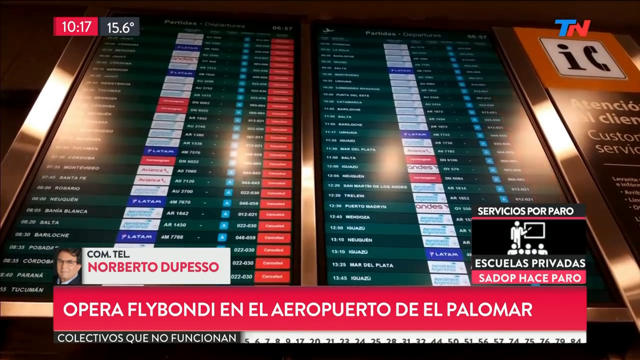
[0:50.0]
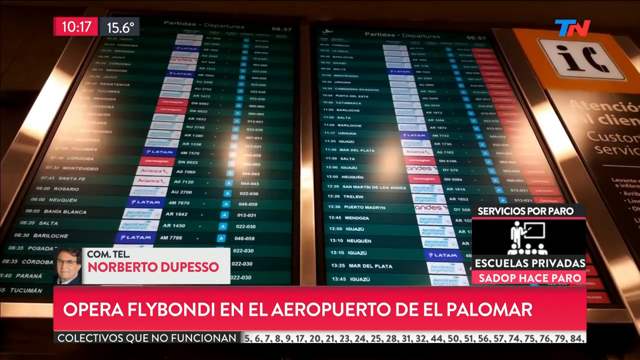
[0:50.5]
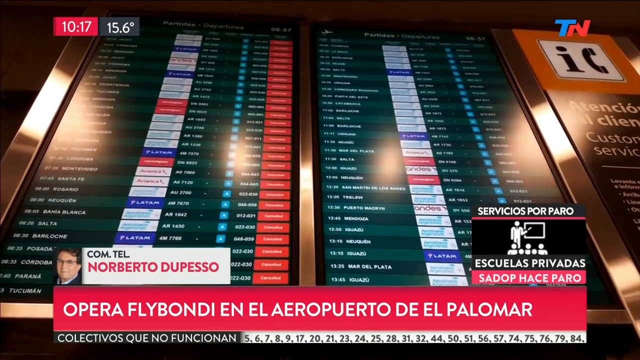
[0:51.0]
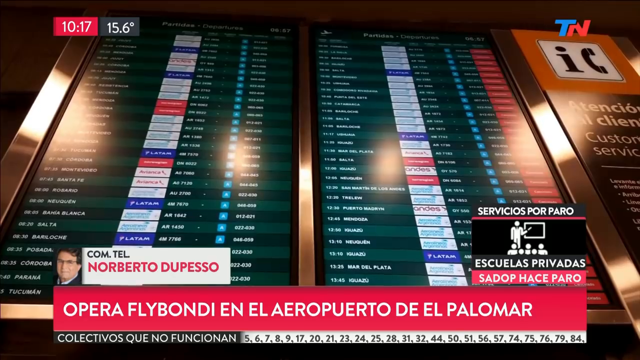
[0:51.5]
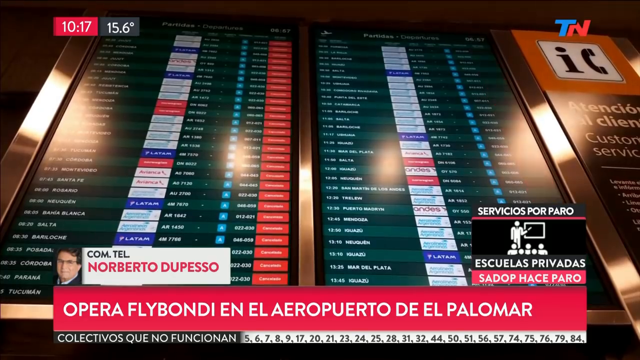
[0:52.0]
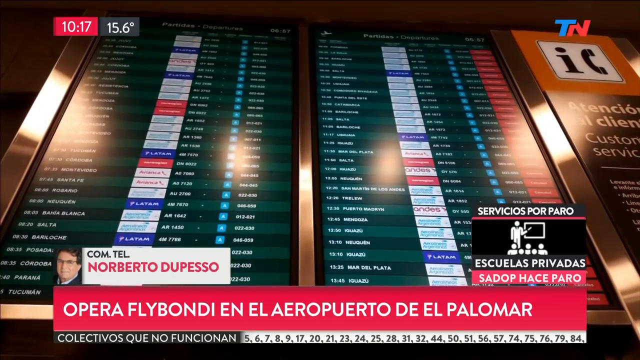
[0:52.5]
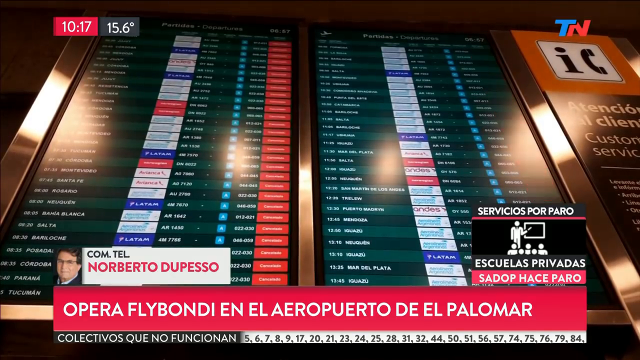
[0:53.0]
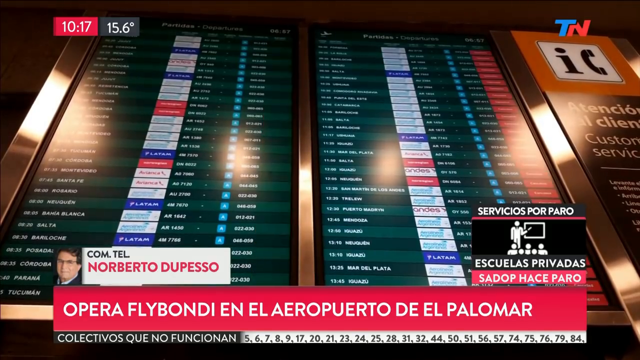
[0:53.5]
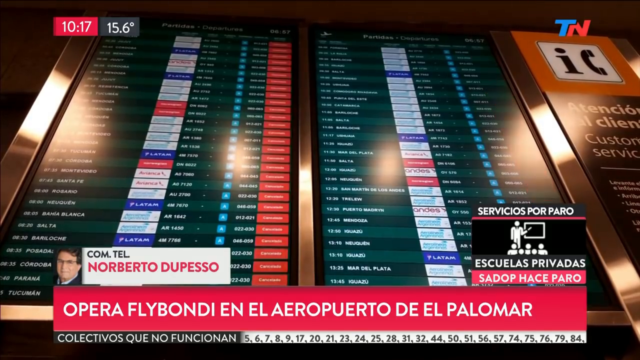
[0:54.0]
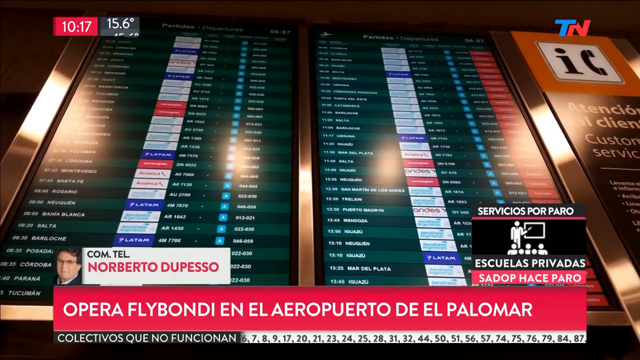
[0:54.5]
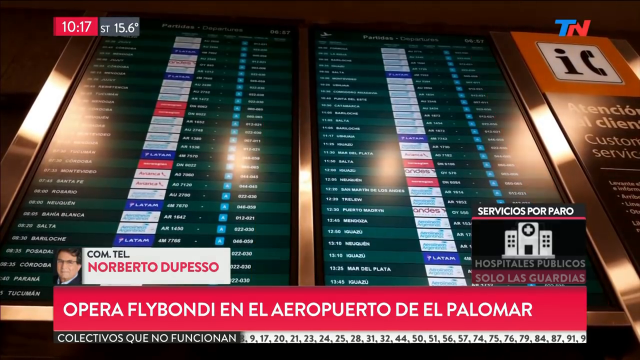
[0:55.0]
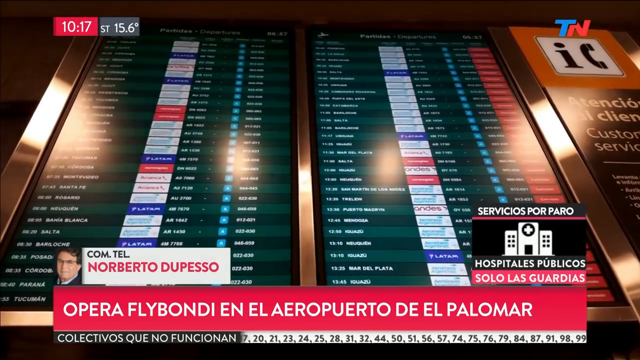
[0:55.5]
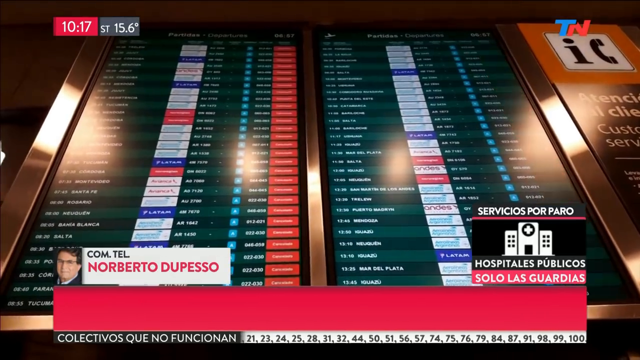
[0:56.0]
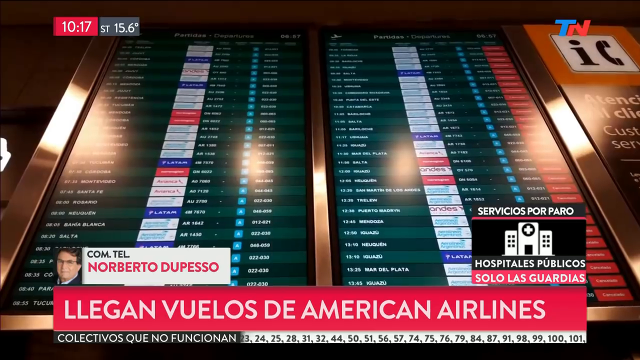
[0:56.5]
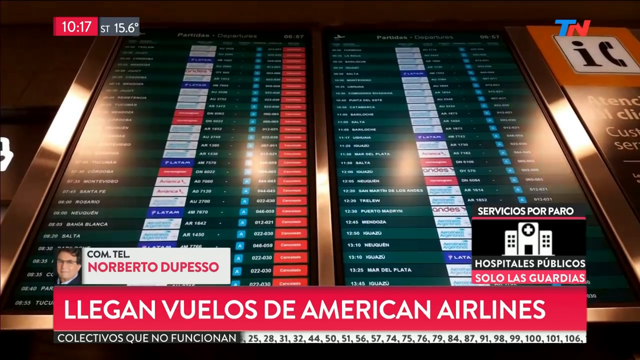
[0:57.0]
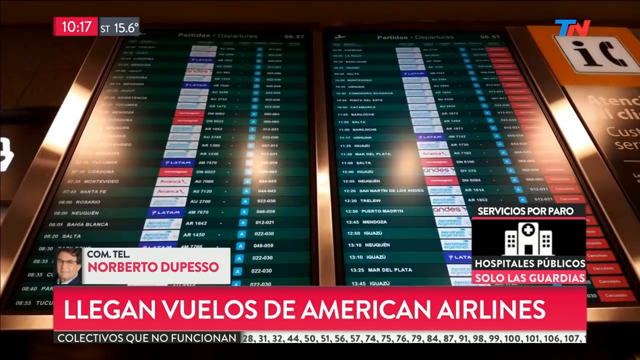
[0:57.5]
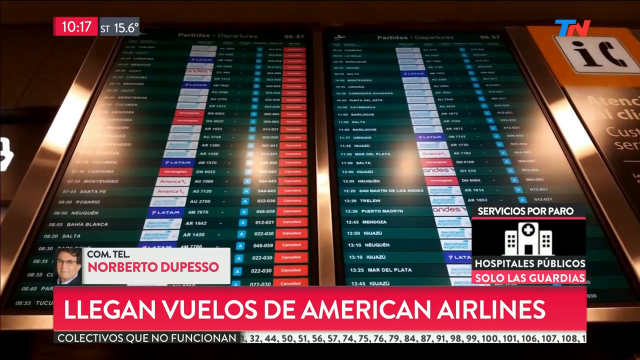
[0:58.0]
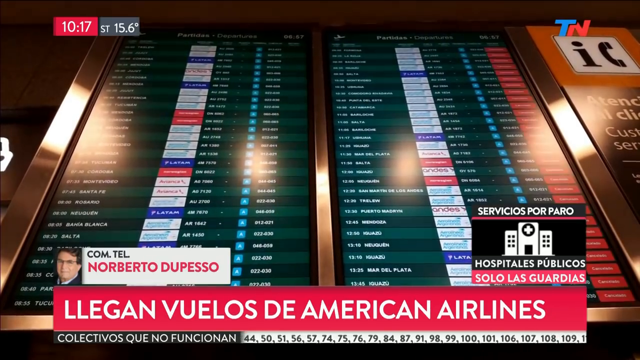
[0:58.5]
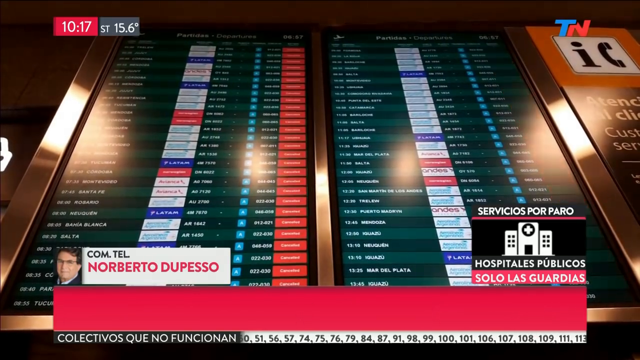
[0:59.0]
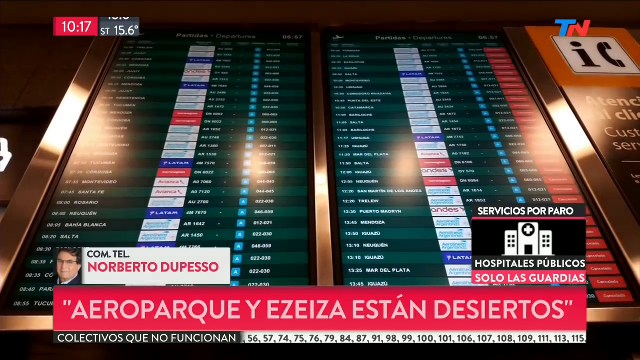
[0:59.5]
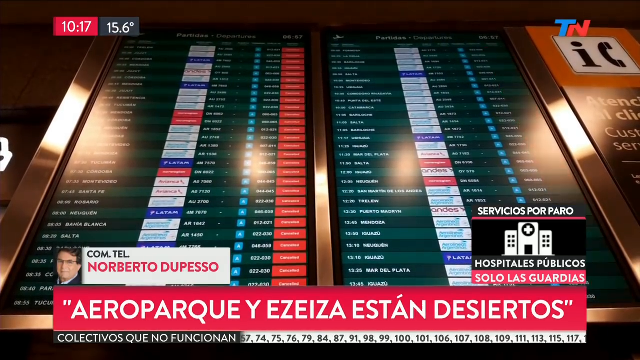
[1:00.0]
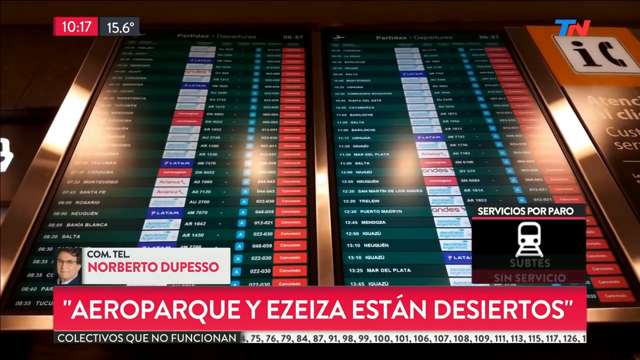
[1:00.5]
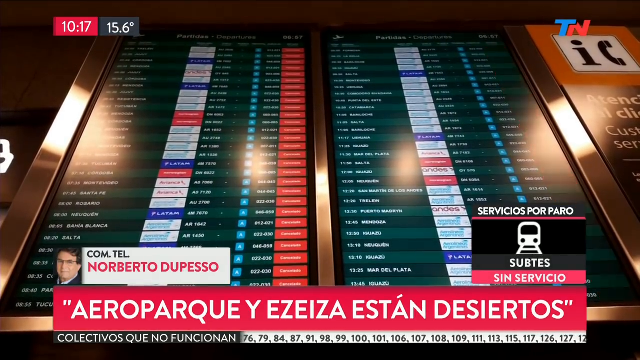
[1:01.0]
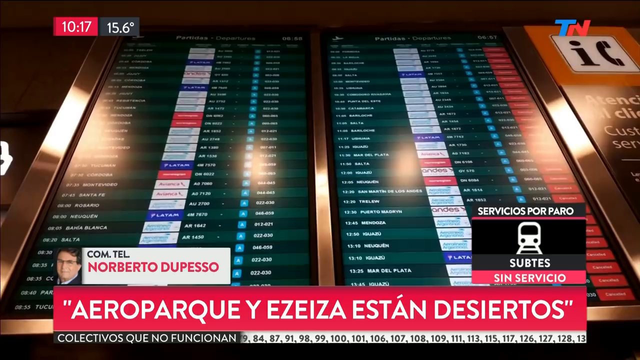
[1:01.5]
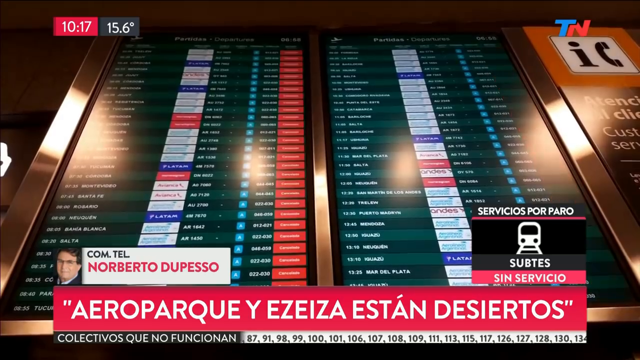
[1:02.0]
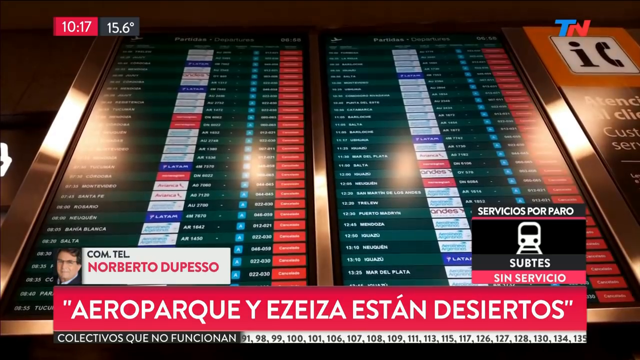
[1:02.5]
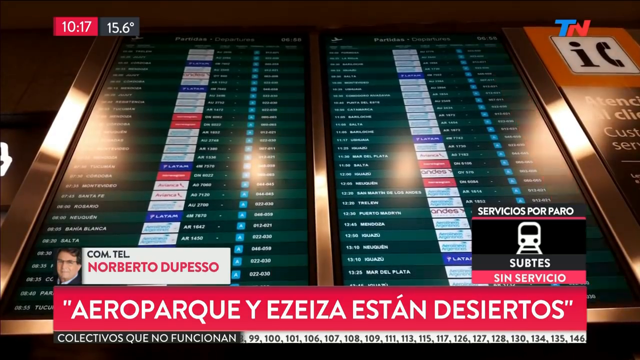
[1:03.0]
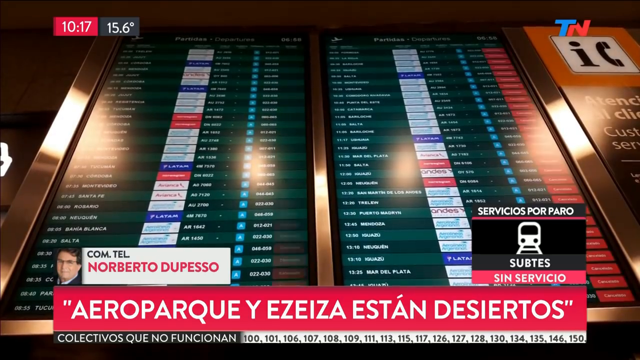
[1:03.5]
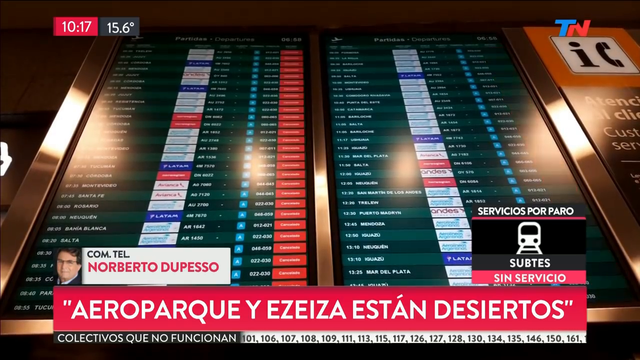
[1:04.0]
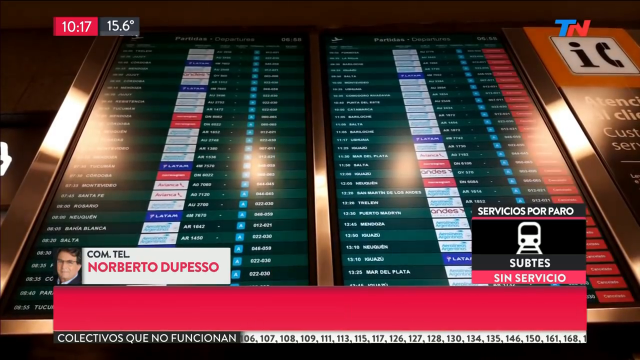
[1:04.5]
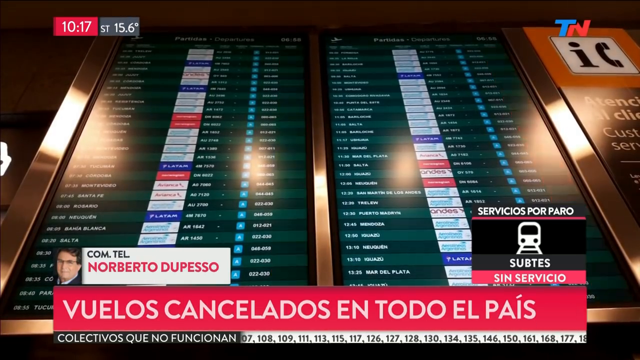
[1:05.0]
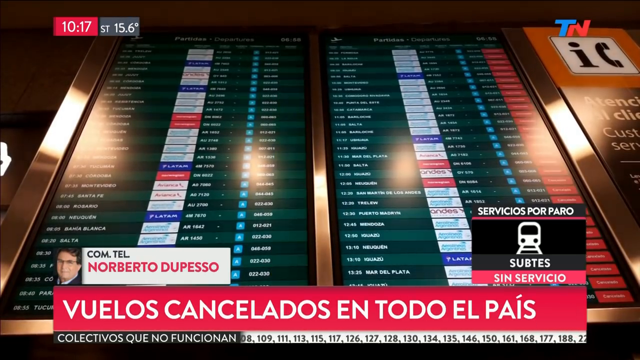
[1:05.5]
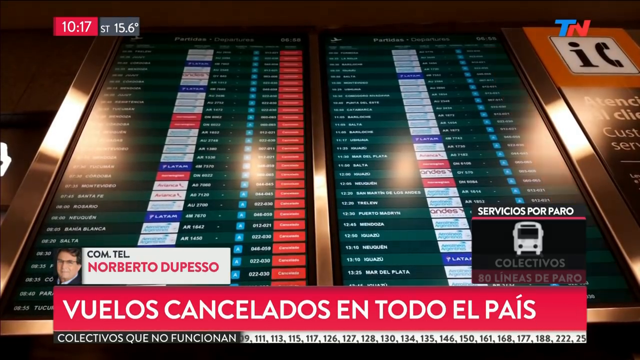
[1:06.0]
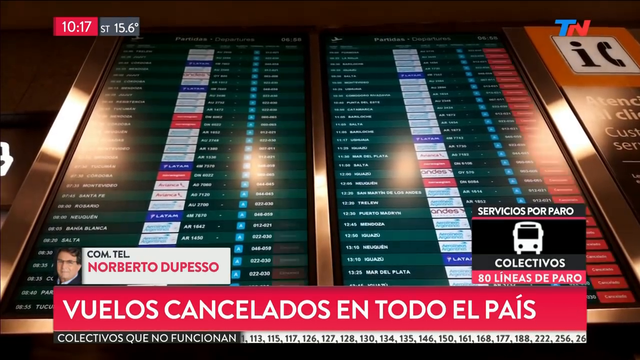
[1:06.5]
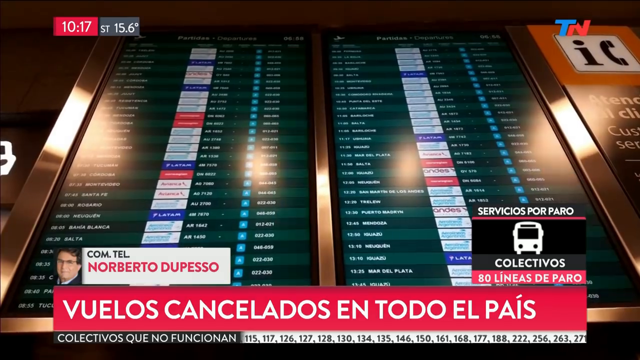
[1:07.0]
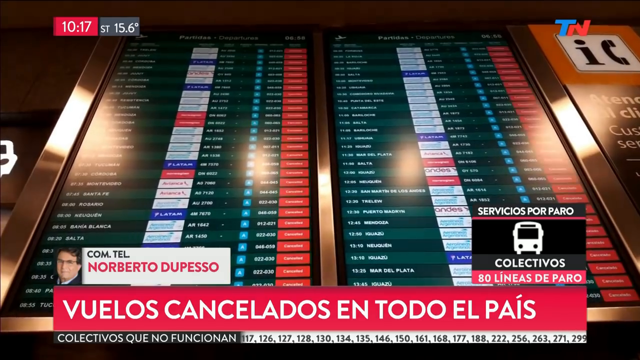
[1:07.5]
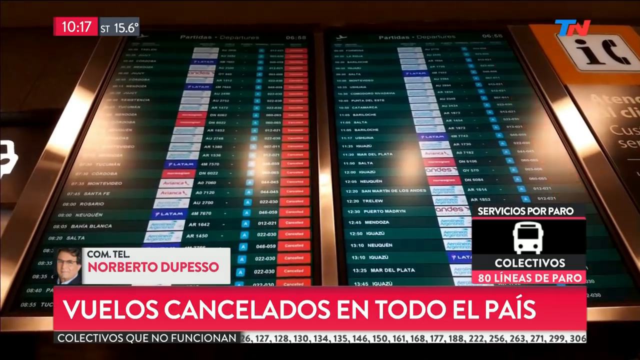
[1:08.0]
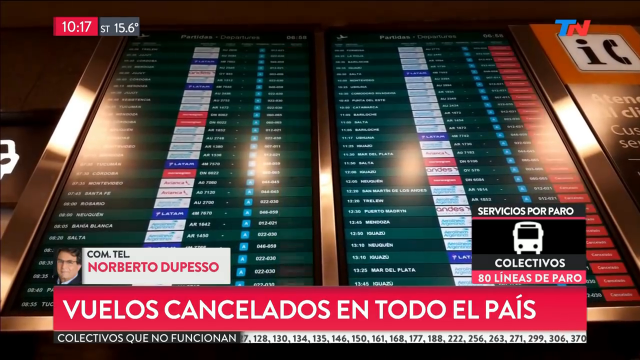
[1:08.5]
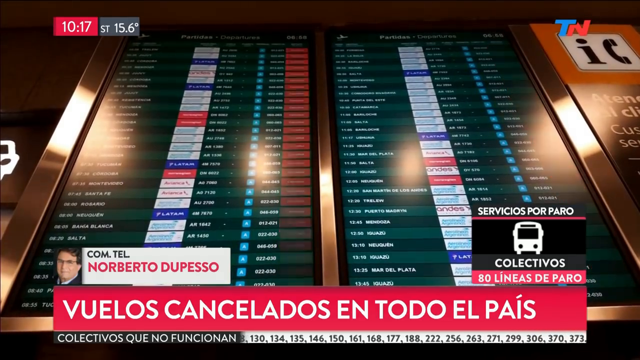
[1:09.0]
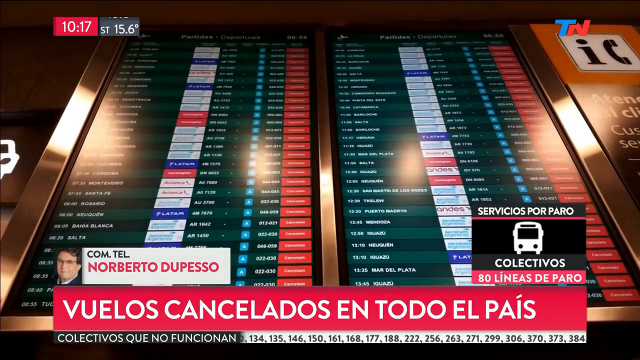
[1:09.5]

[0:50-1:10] A close view shows the two big screens in the rail station. The screens have red lights that act like indicators. On the left side there is a portrait of a person, possibly someone directing people through the station. The writing appears to be in Spanish. The screens display a long list of travel destinations and times, along with lights and the letters "AIC".